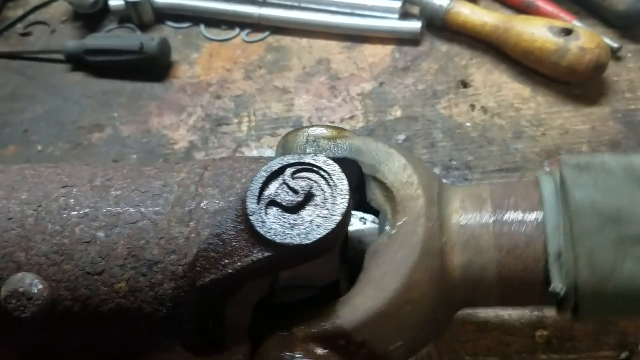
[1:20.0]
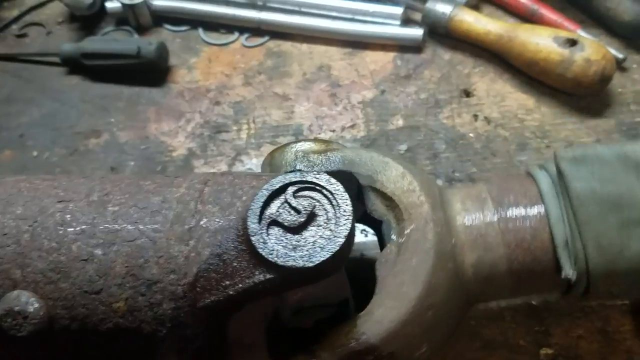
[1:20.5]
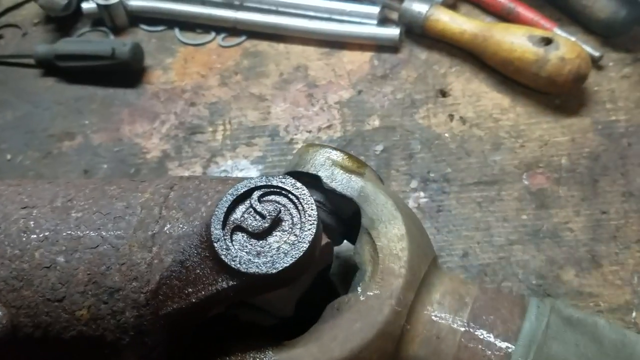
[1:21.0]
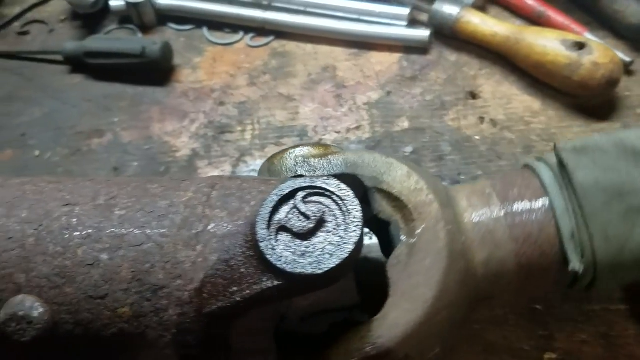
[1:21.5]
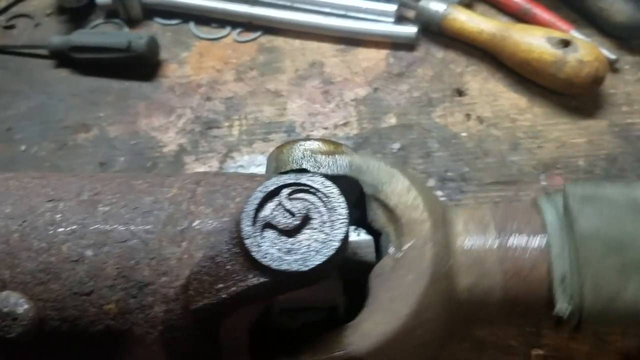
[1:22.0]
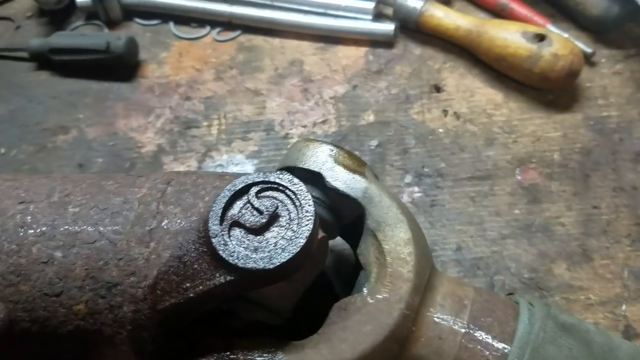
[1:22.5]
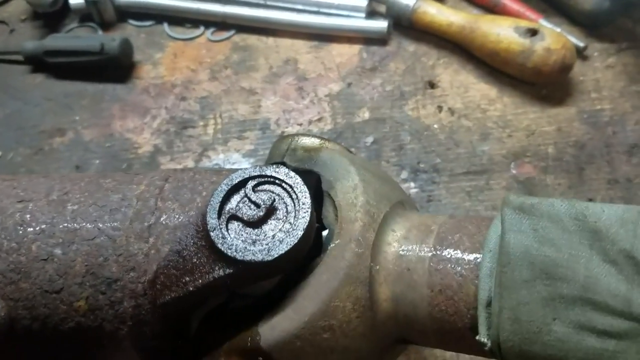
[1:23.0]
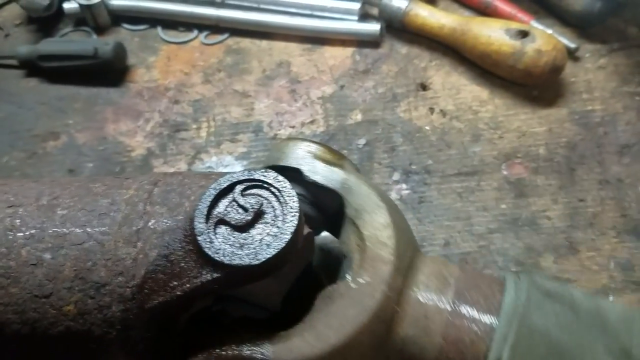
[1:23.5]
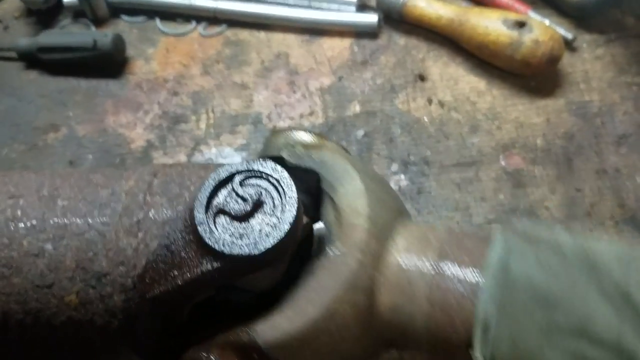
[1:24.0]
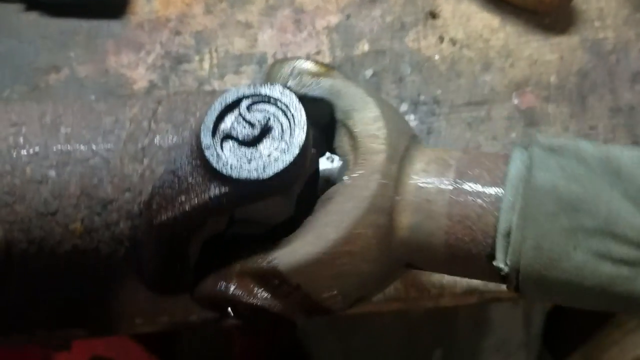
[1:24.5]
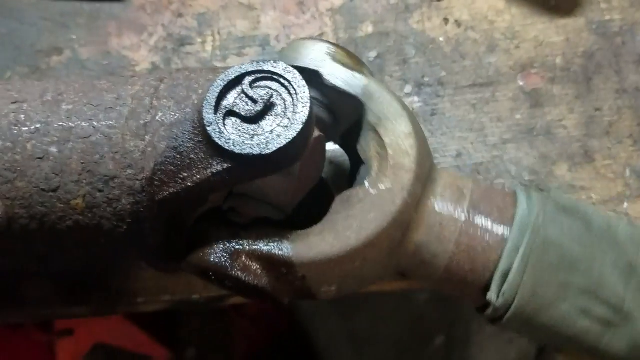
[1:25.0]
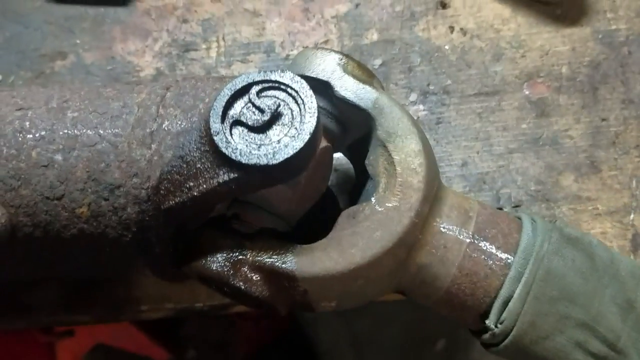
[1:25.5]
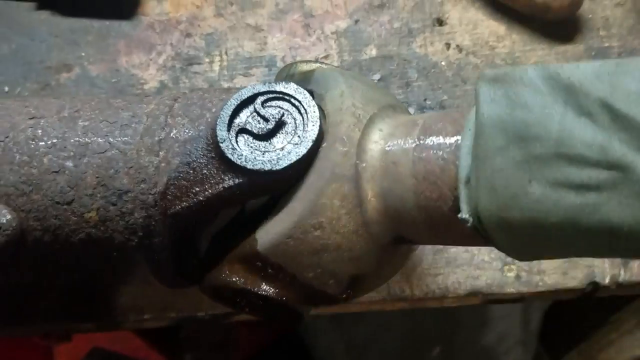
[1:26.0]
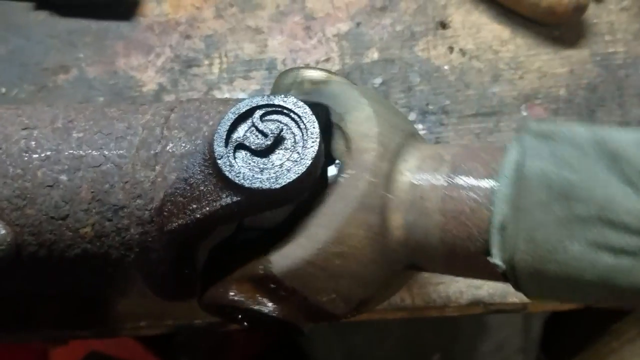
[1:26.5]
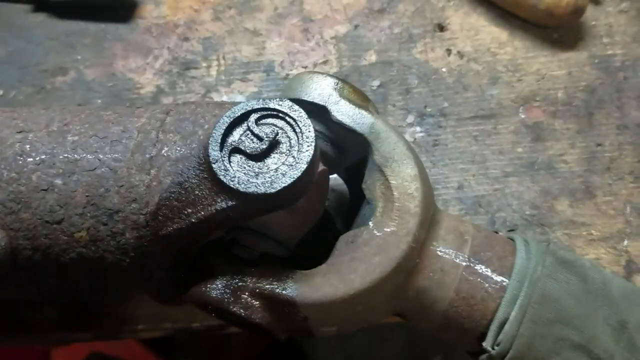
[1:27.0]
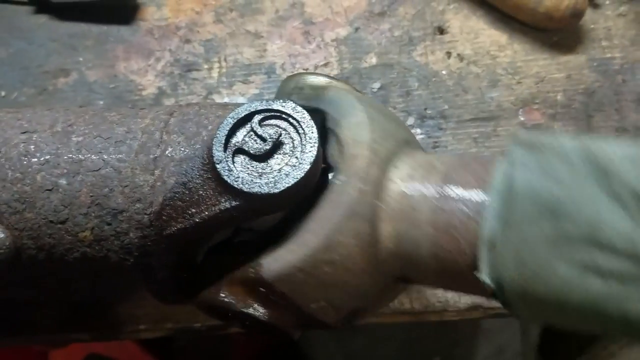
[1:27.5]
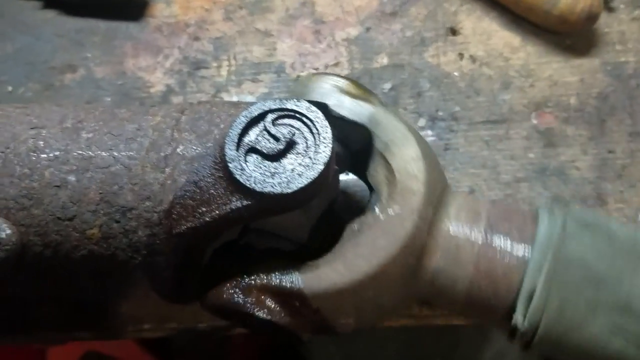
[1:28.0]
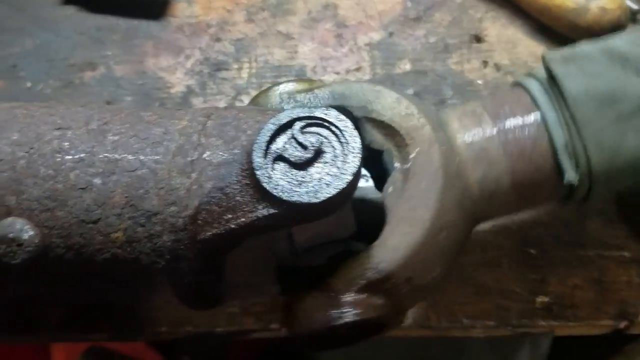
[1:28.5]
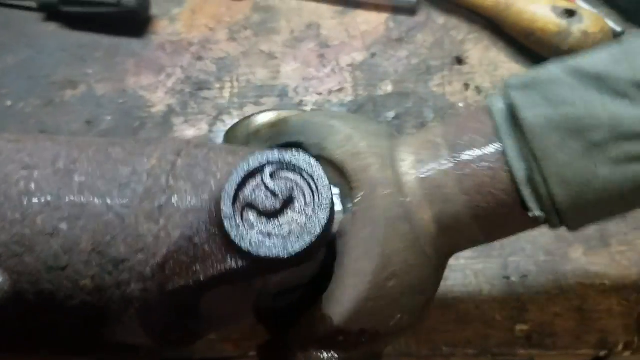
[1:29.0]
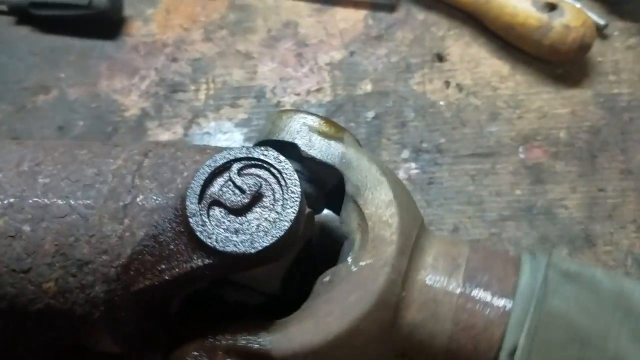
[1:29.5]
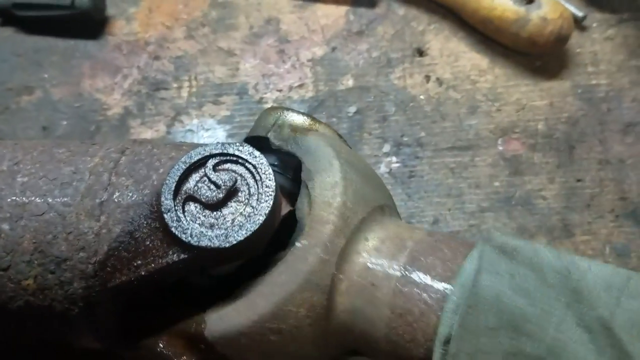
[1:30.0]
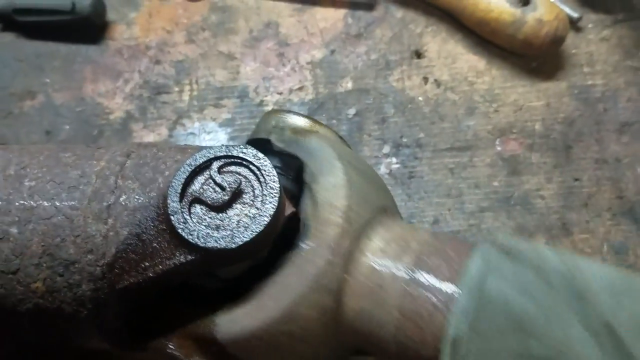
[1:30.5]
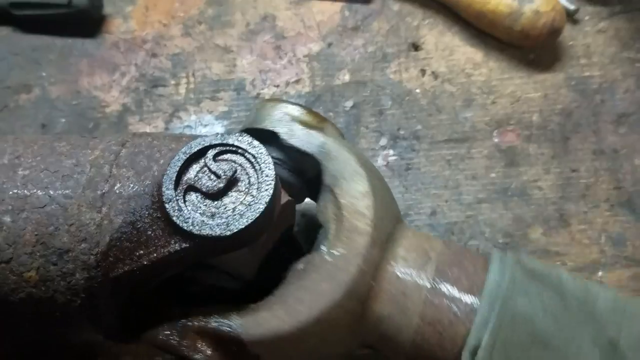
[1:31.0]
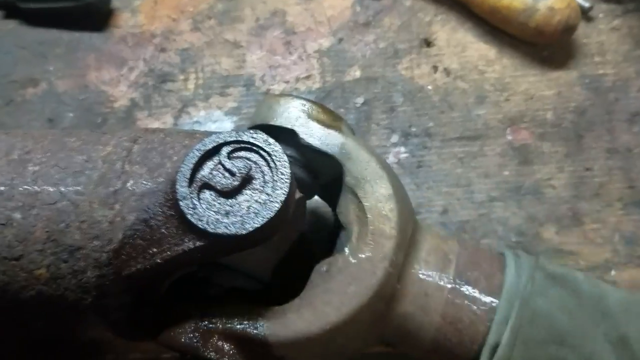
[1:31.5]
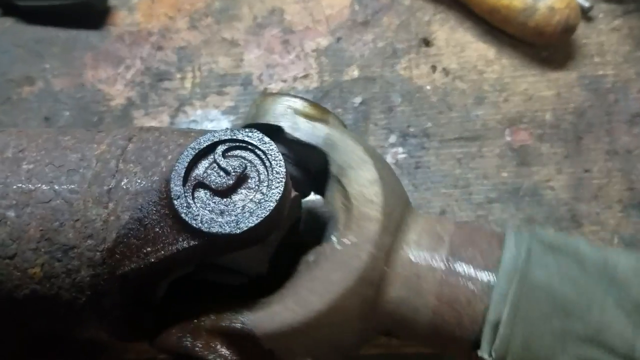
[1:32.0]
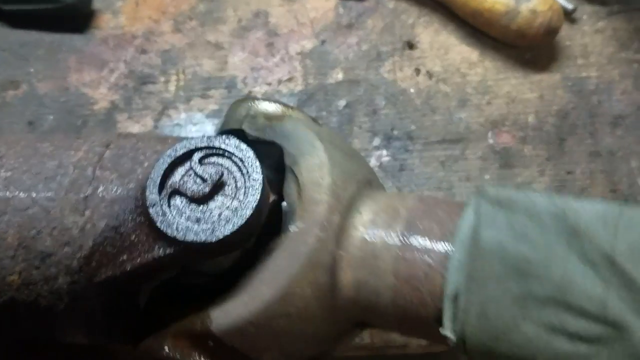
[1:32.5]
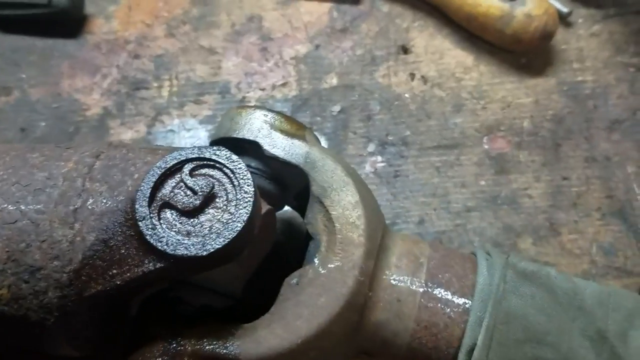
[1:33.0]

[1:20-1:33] The right arm of the shaft moves up and then left and right. It then moves up and down slowly in a slightly, sort of circular motion, working around the range of movement, apparently to check that it moves freely without issues or locking up. The right arm continues to move up and down a bit quicker, and by the end the range of motion appears to be as expected, moving freely in all directions.